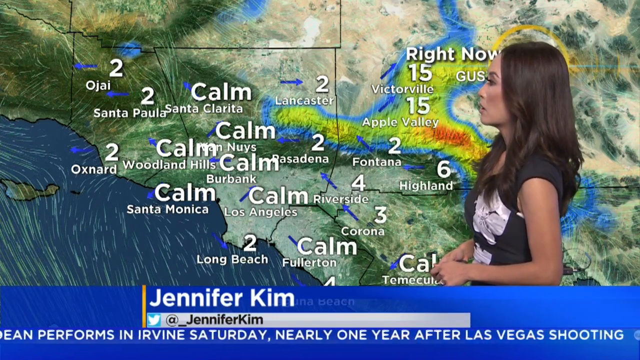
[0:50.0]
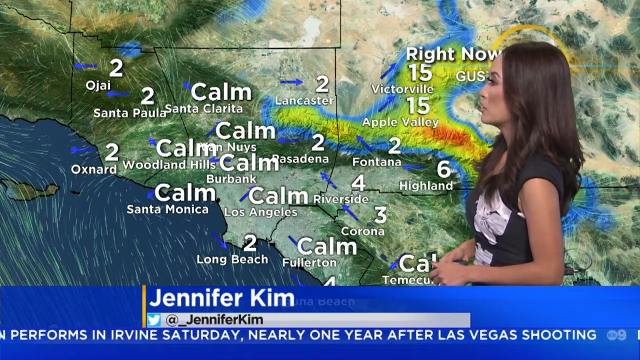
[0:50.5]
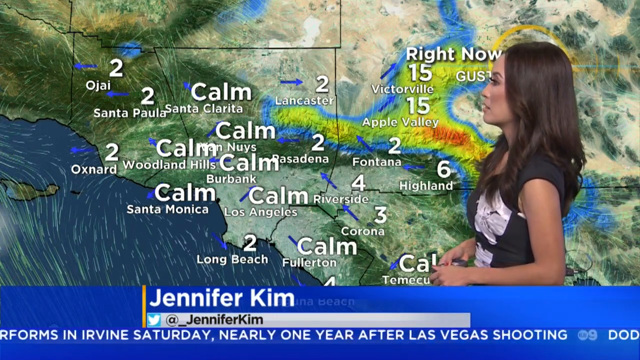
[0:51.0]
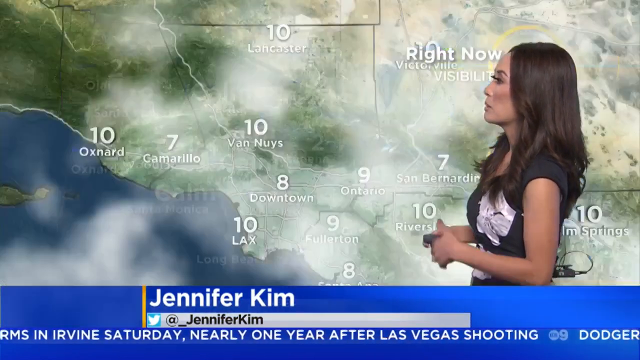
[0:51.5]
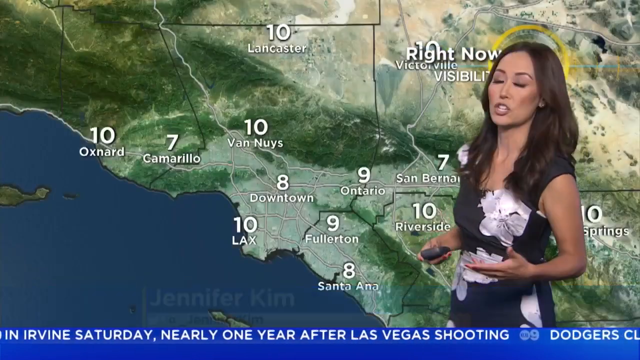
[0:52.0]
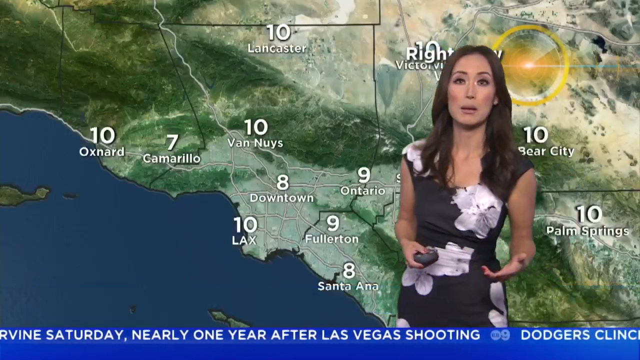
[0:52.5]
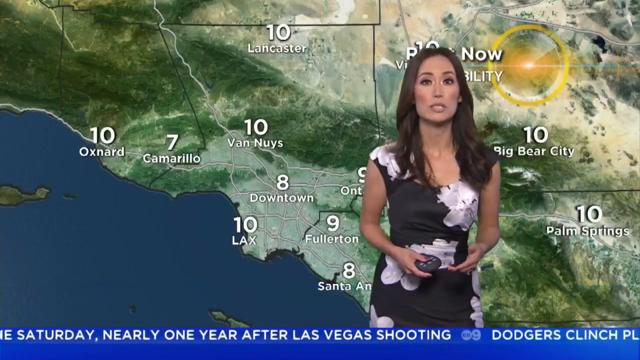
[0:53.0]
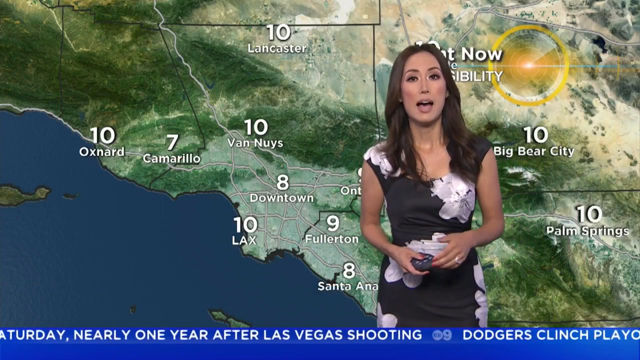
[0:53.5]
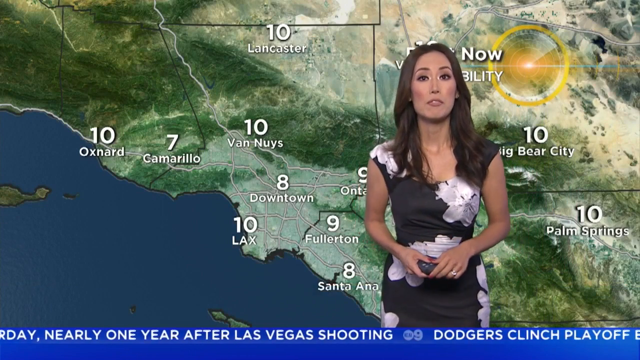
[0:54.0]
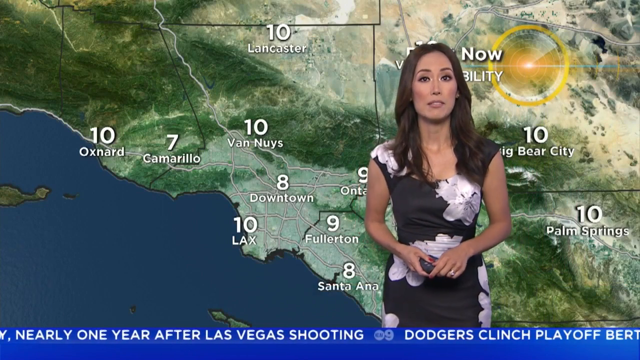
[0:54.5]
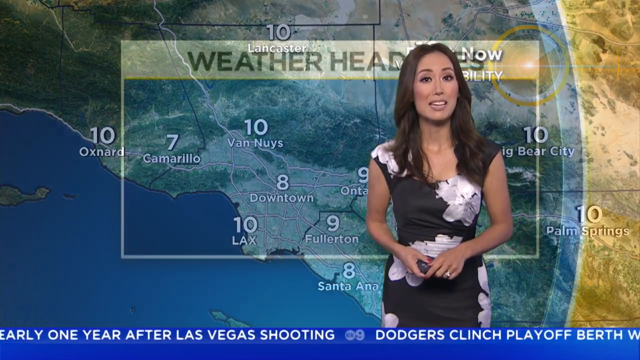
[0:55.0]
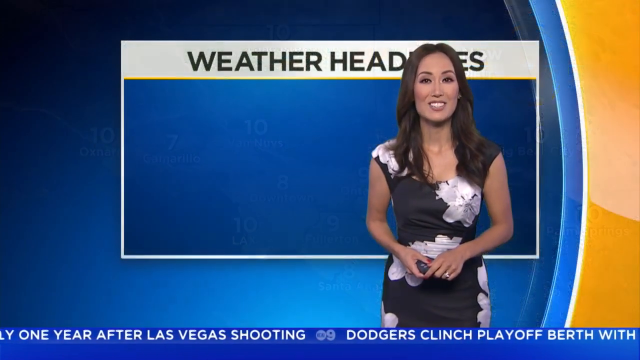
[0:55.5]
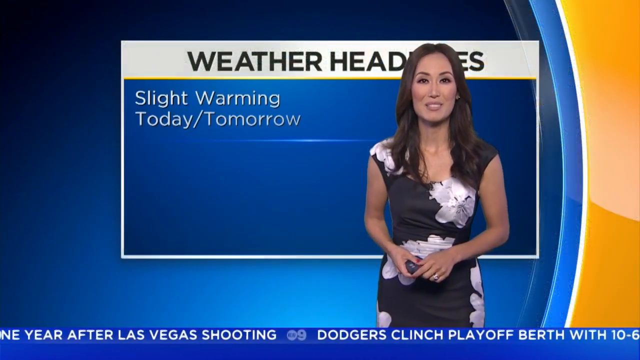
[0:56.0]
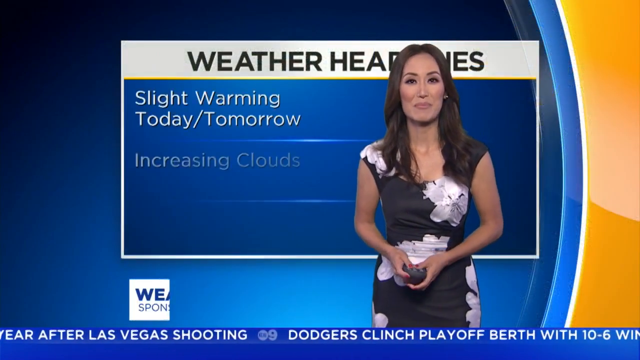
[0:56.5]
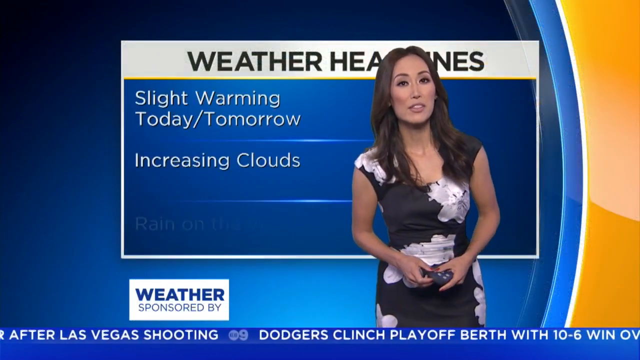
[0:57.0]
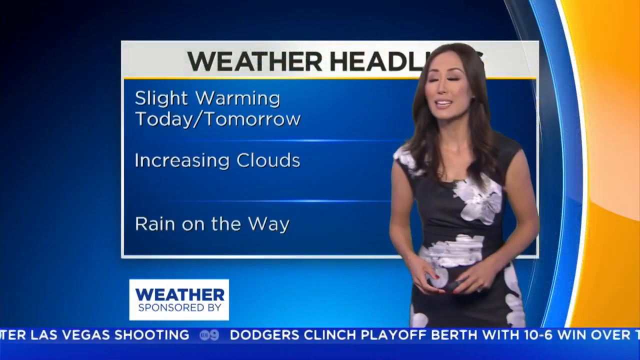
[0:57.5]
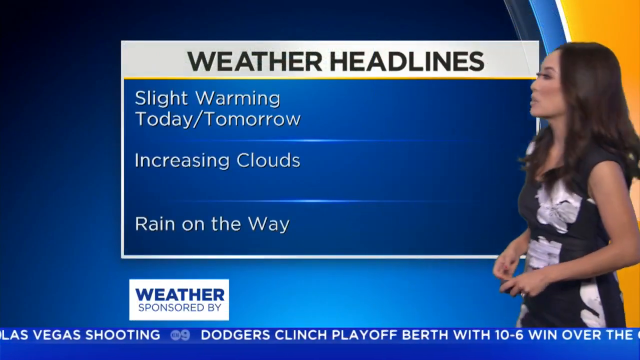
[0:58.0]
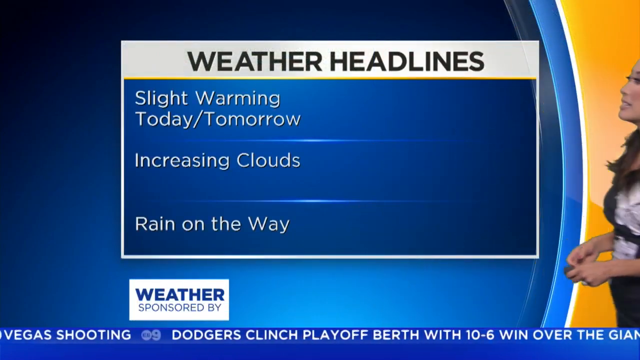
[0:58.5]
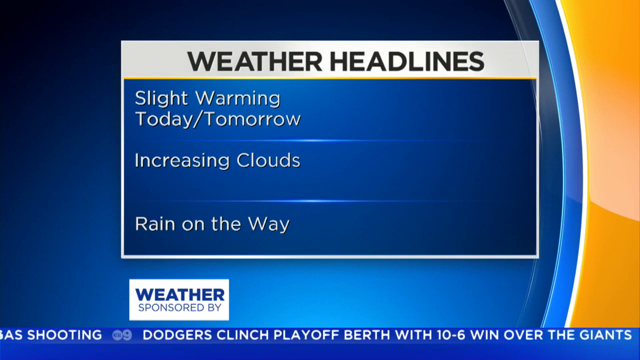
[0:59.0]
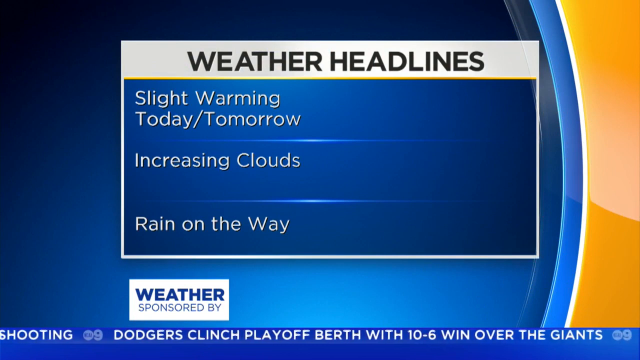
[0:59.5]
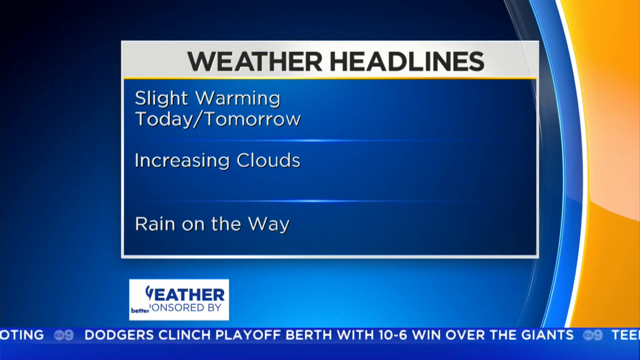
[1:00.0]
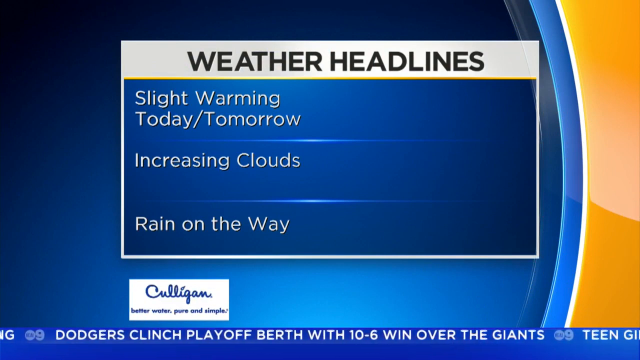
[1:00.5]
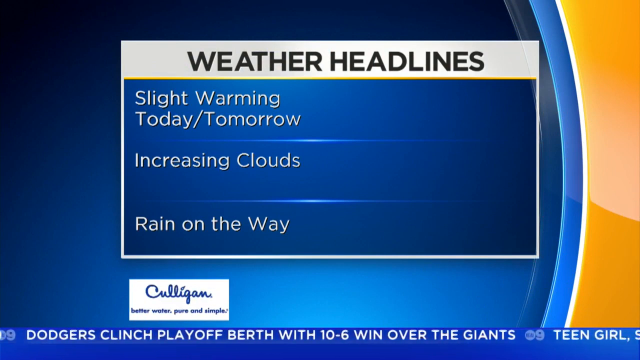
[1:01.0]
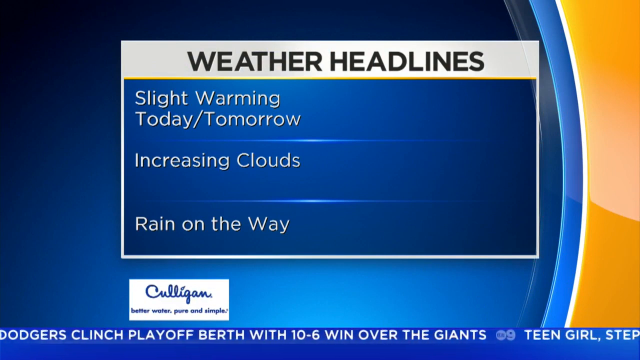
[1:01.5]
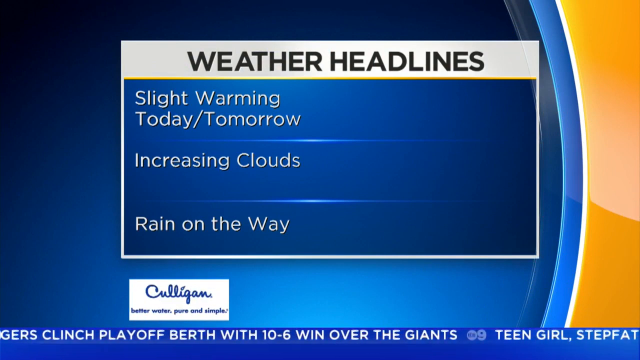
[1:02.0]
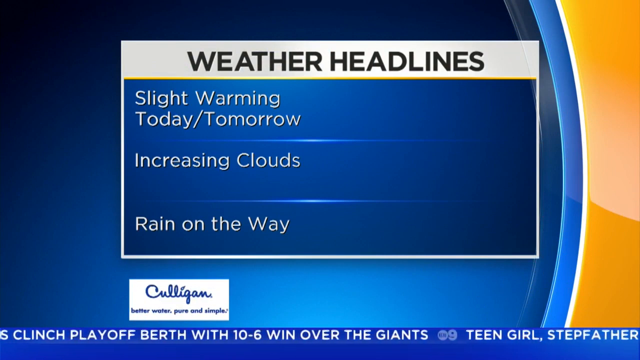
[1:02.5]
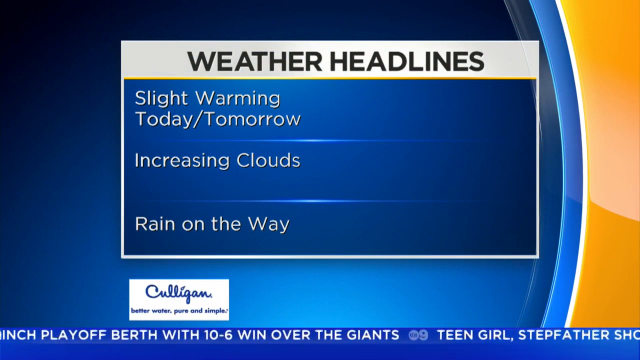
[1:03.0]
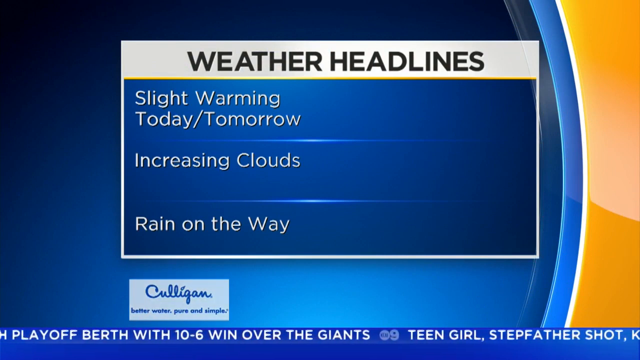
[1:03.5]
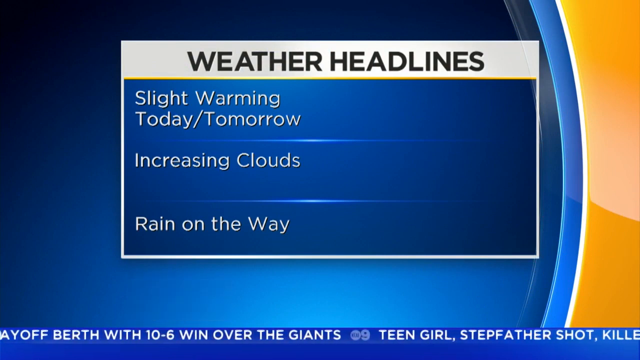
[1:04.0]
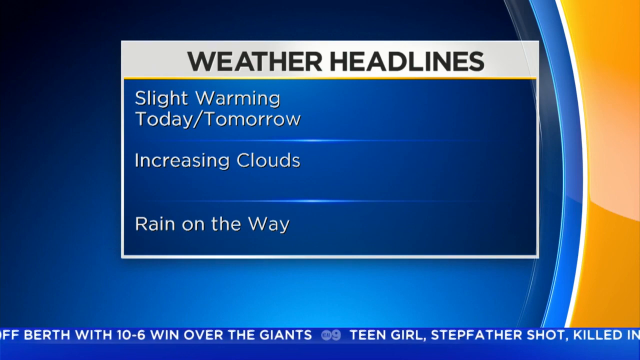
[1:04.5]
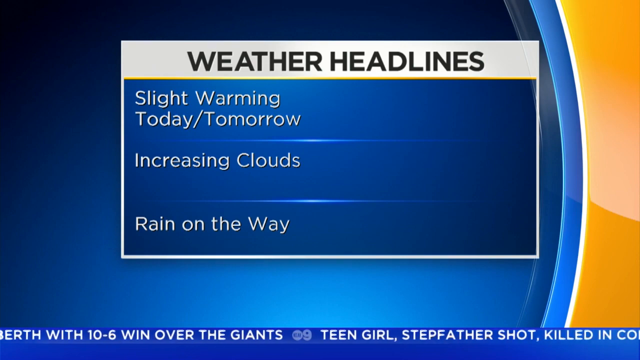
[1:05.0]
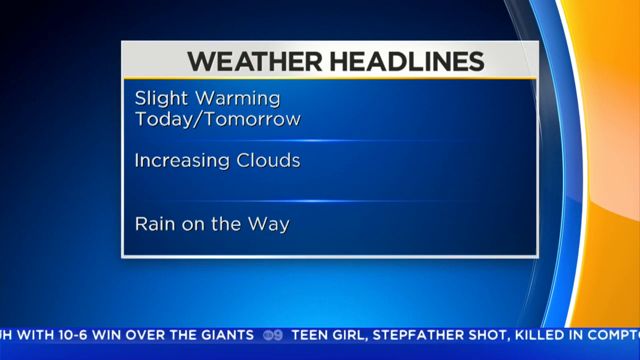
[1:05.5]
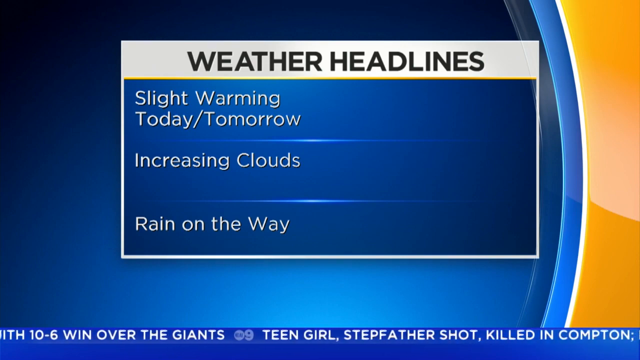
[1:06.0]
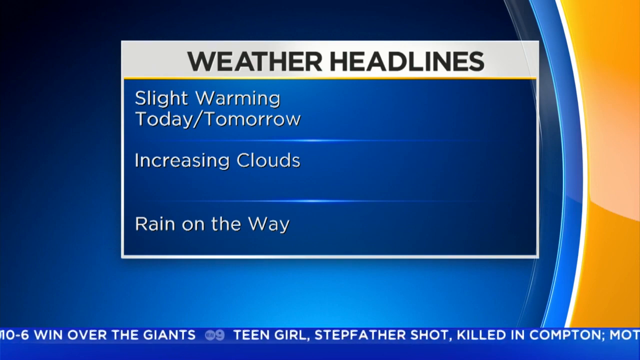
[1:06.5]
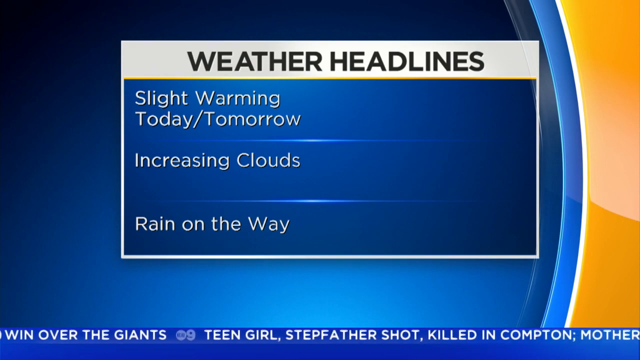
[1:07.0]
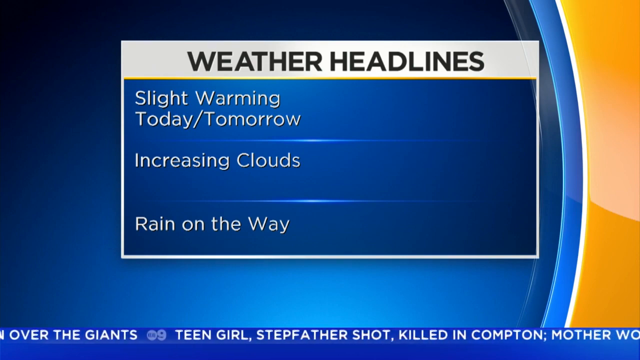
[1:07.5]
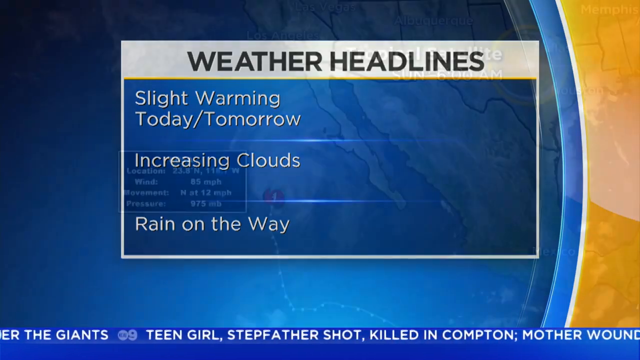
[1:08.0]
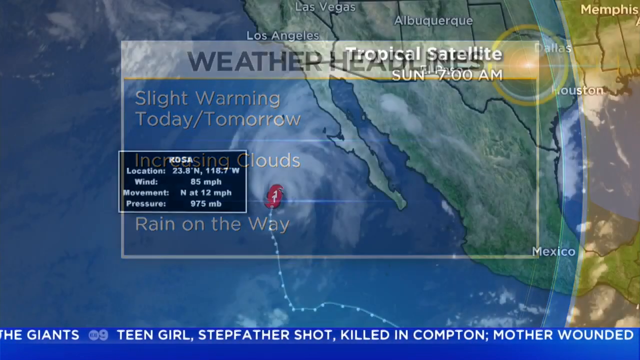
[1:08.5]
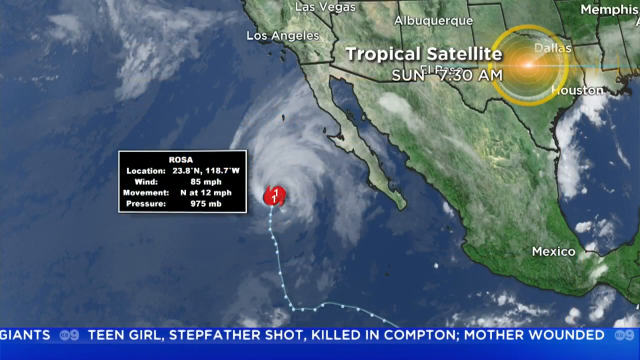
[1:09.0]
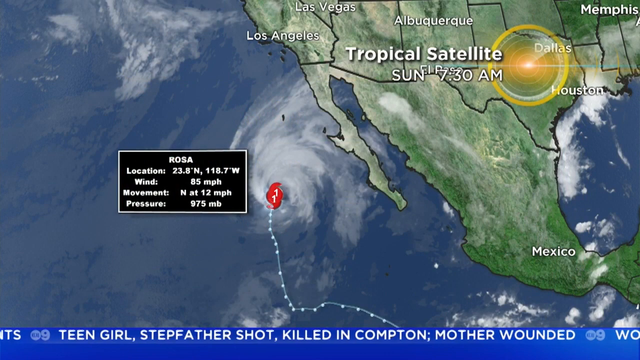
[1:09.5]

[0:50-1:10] The weather screen for California shows "calm" and the numbers 2, 3 and 4, possibly wind speed or rainfall inches. The weather lady, apparently named Jennifer Kim, wears a white and black dress, has brunette hair and looks partly Asian. Other numbers appear, such as 8, 9, 10 and 7, possibly related to visibility. A screen reading "weather headlines" follows: "slight warming today, tomorrow, increasing clouds and rain on the way," in white words on a blue background. Right at the end, "tropical satellite" appears, tracking a tropical storm or hurricane called Rosa.